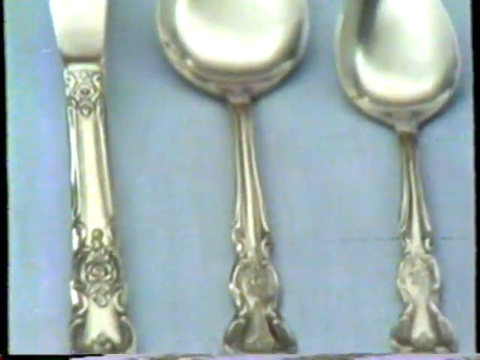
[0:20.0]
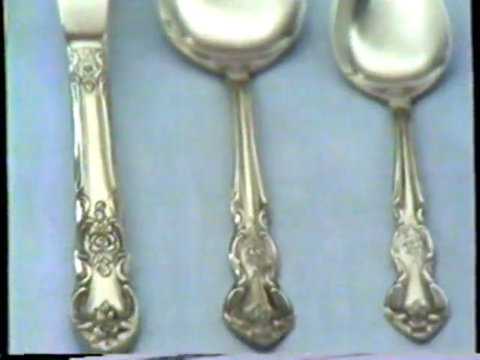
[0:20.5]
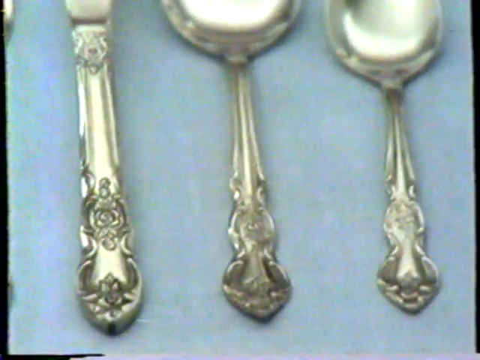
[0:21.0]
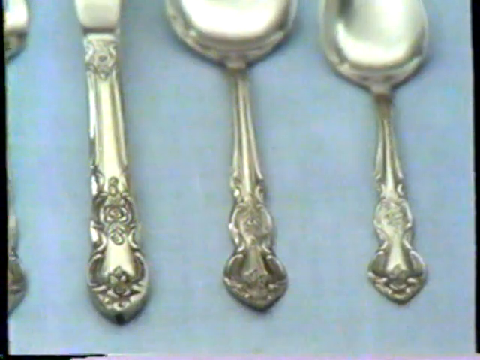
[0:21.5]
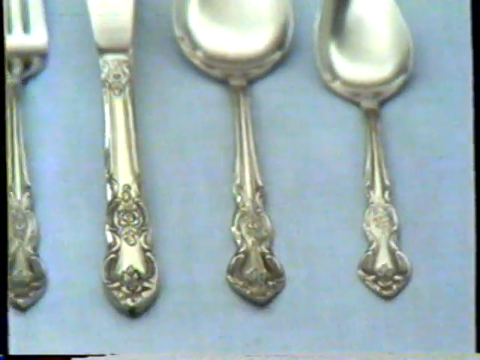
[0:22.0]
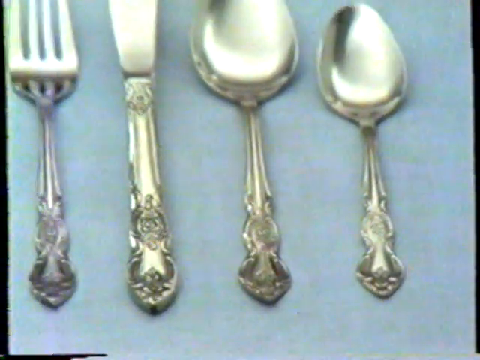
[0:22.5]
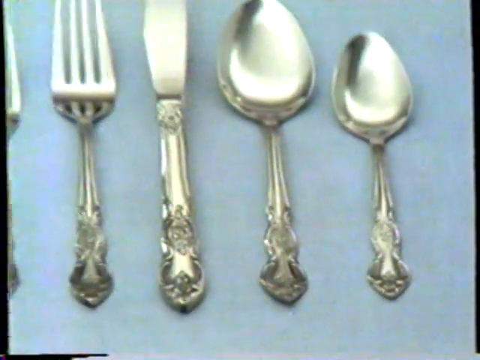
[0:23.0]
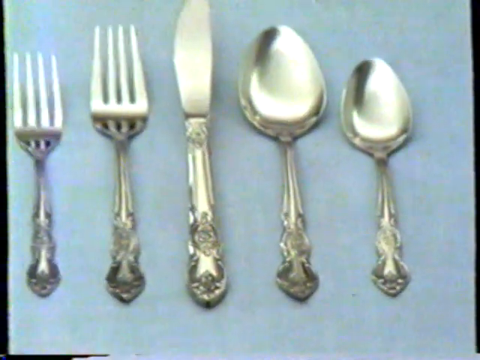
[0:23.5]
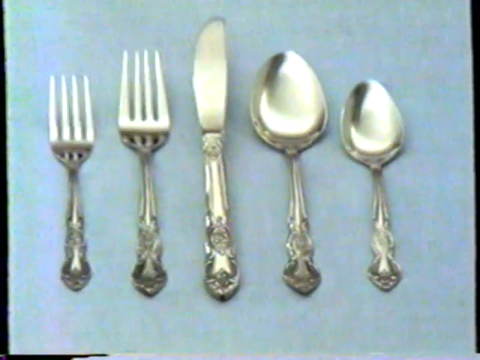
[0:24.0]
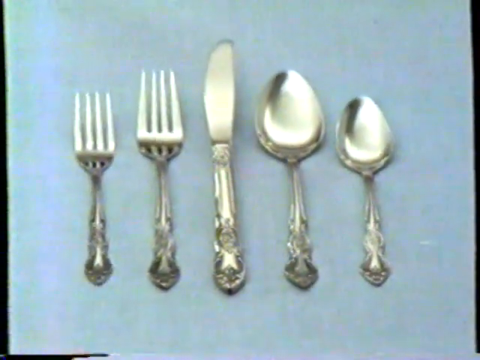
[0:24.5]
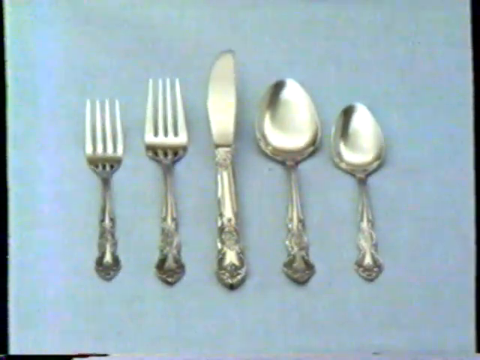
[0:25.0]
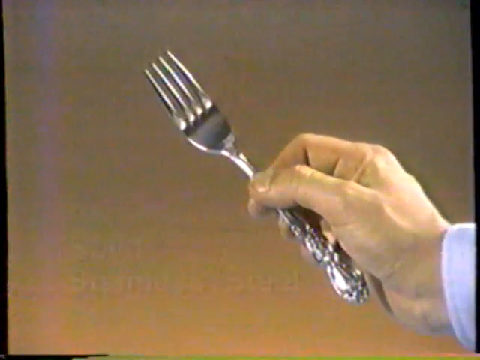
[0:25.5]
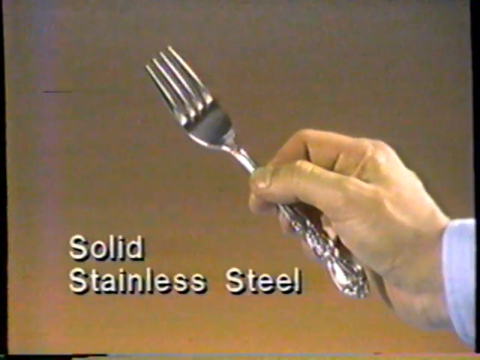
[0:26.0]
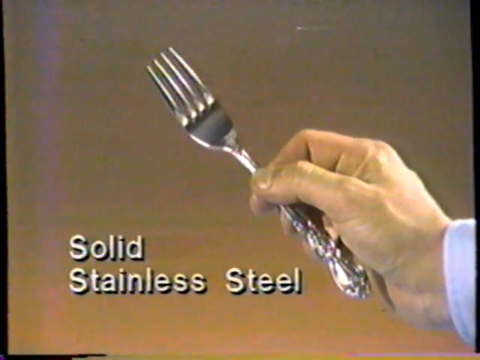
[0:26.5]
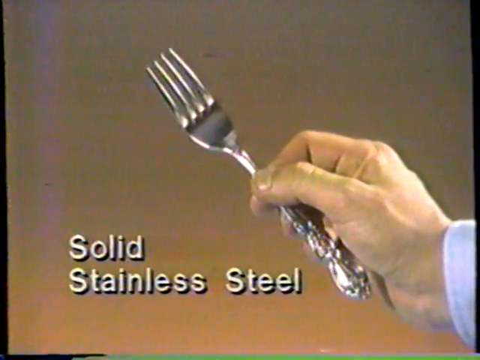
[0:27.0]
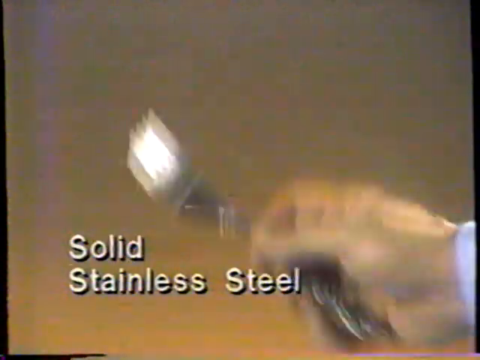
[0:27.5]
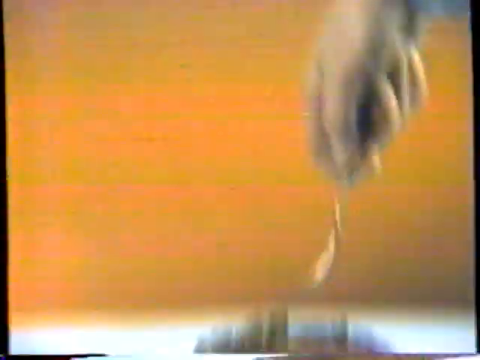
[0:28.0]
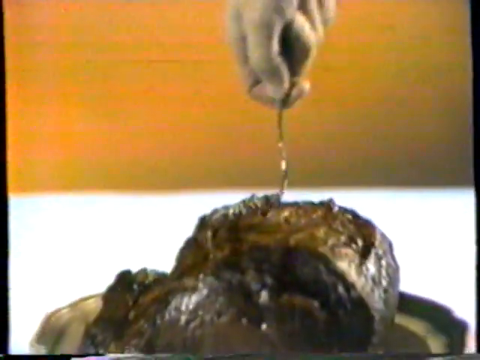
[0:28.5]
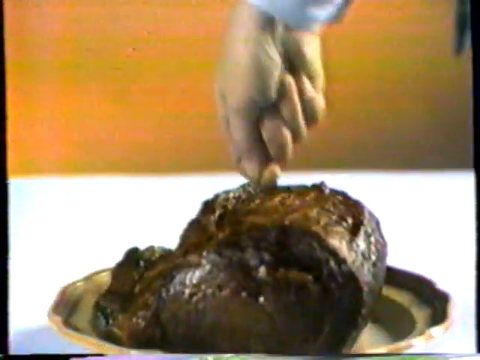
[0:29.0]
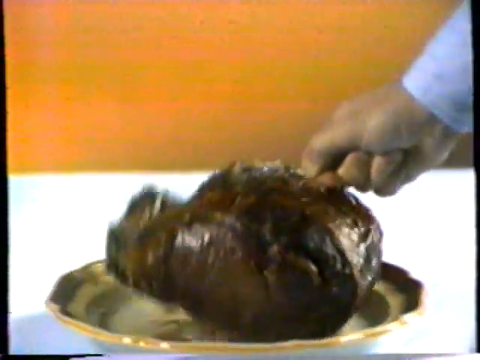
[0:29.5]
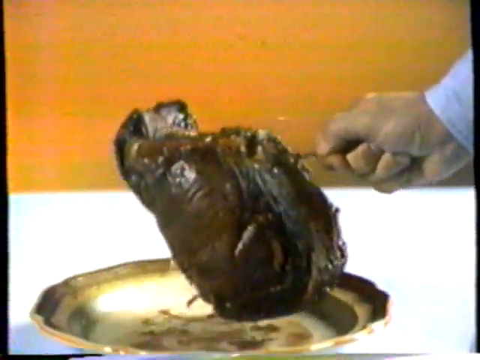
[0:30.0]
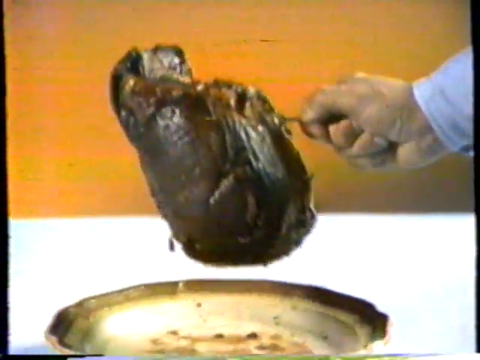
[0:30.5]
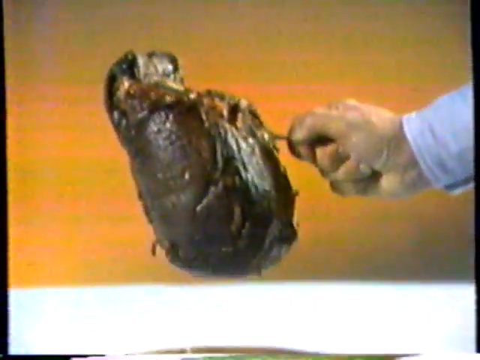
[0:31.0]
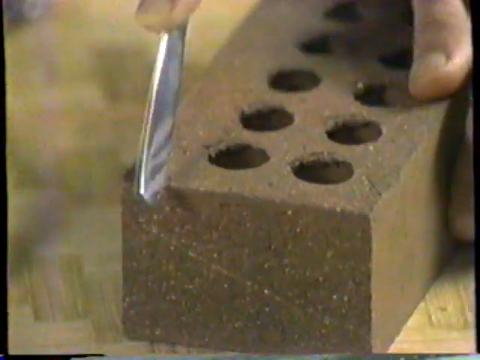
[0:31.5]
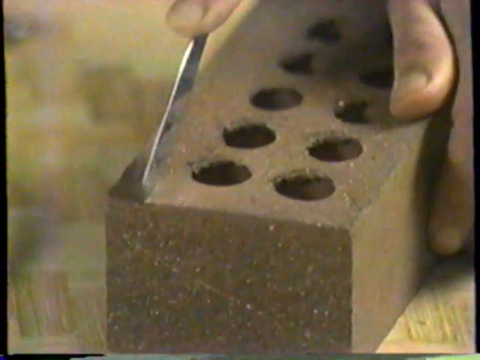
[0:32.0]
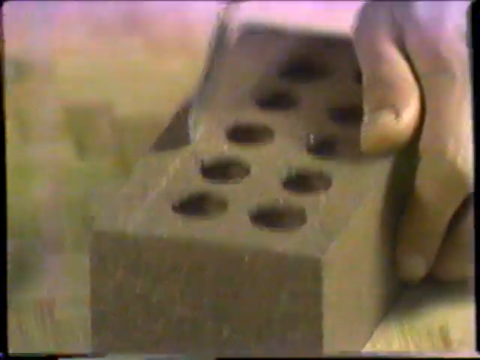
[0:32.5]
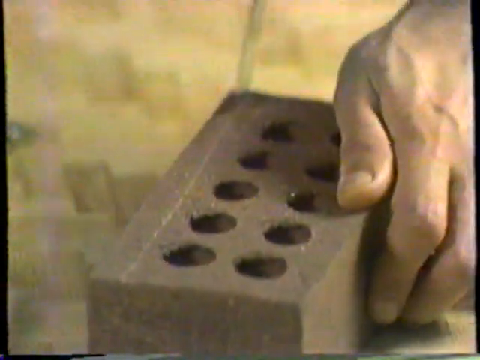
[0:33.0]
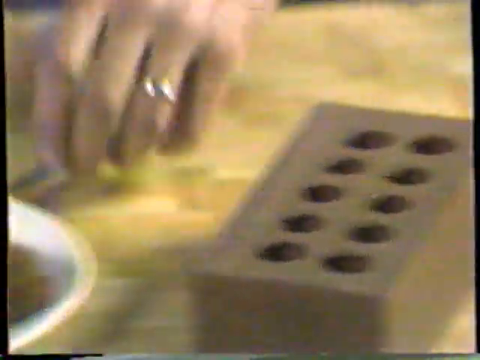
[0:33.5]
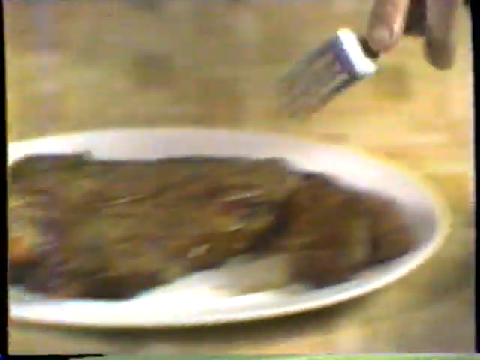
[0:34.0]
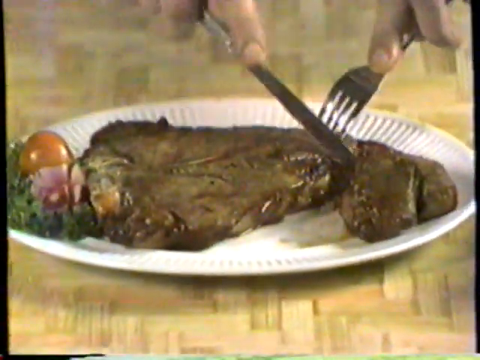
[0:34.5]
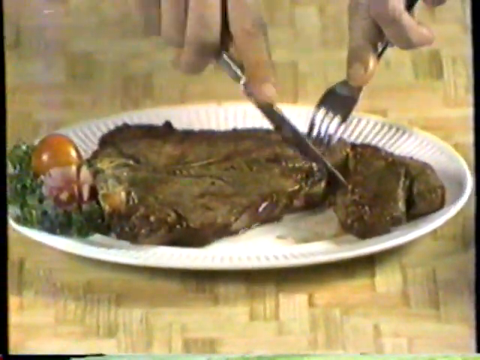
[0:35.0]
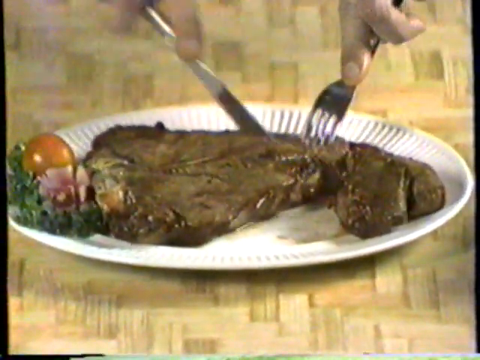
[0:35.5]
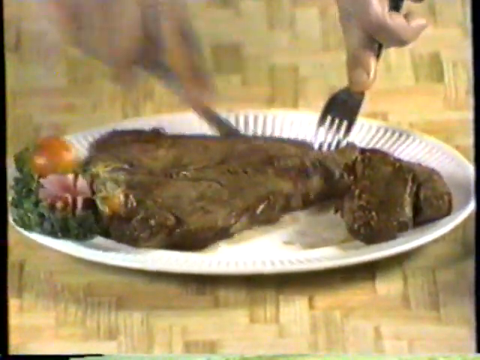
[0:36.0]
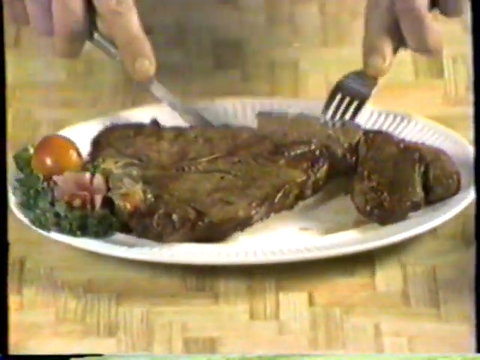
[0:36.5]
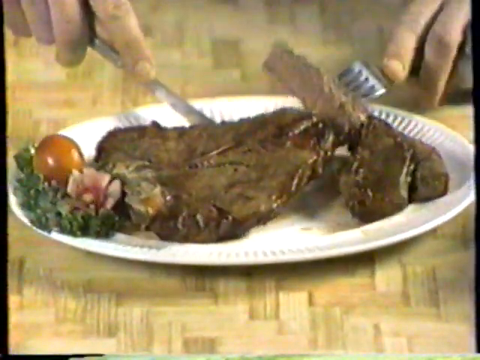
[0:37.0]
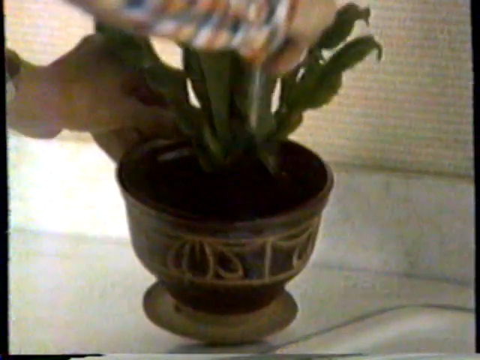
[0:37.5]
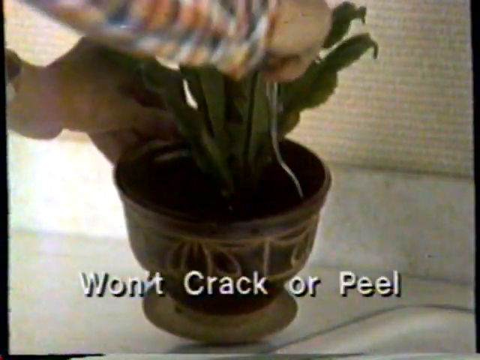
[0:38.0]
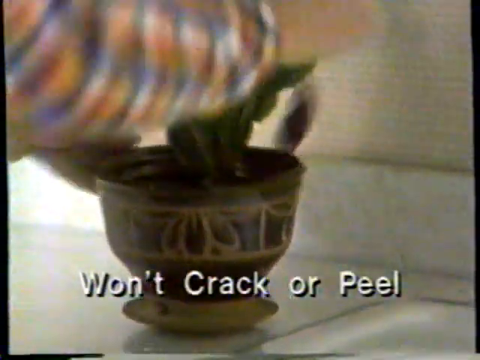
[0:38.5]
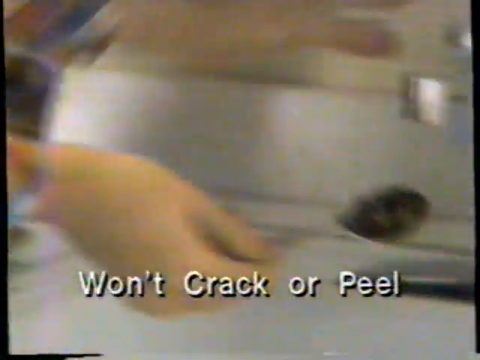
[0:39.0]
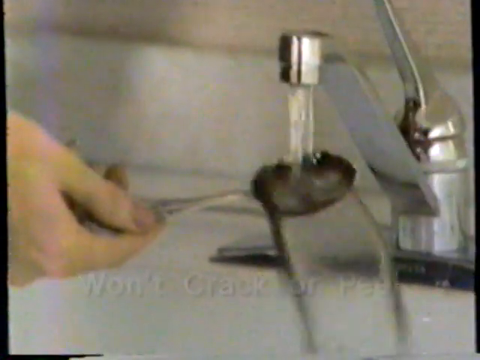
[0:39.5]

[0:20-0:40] A set of silver cutlery with engravings on the handles is on top of a blue tablecloth as the camera zooms out to reveal the full set. A man holds one of the forks against a brown background while on-screen text notes that it is solid stainless steel. He moves the fork downwards, pierces a piece of roast meat and lifts the entire chunk with the single fork. The scene transitions to a man holding the knife across the top of a brick and sliding it down the brick's surface, leaving a visible cut all the way down the brick. Next comes a plate with a steak and a small salad, and the same knife immediately cuts the steak. The scene then transitions to a man in a checkered shirt using a spoon to dig around in the dirt in a pot, before bringing it to a tap on the right and washing it in the sink.